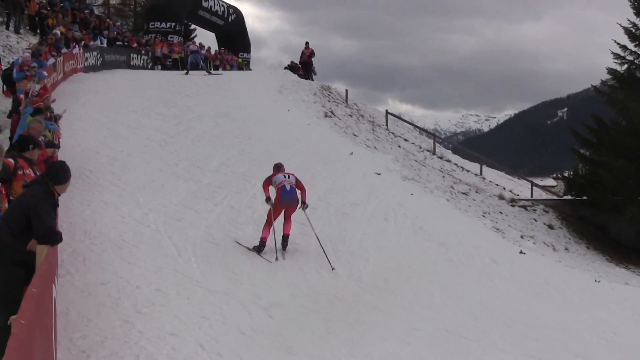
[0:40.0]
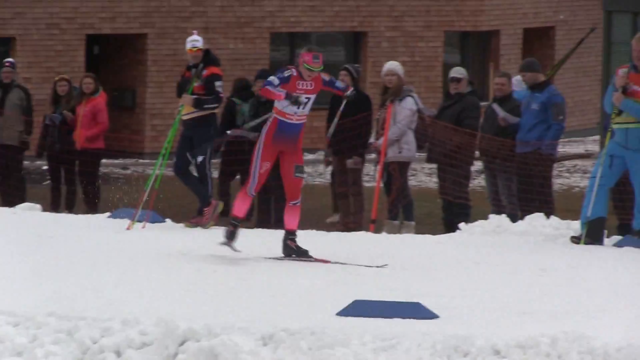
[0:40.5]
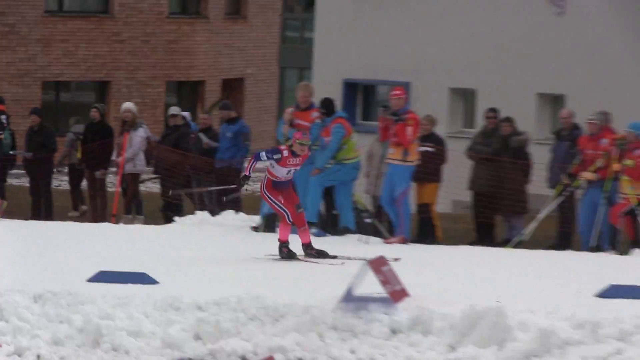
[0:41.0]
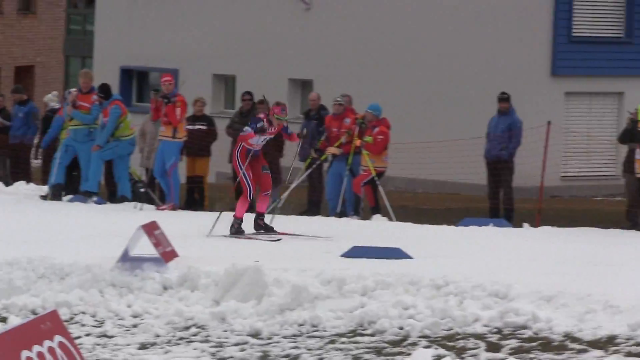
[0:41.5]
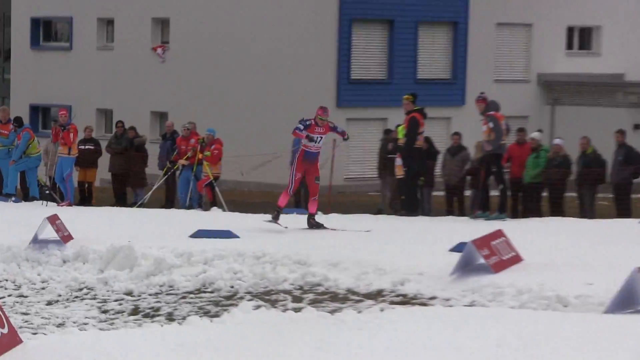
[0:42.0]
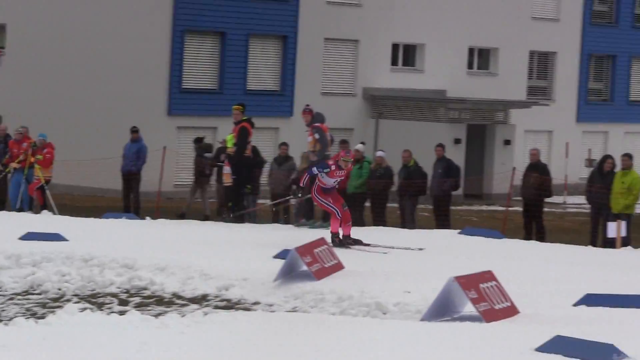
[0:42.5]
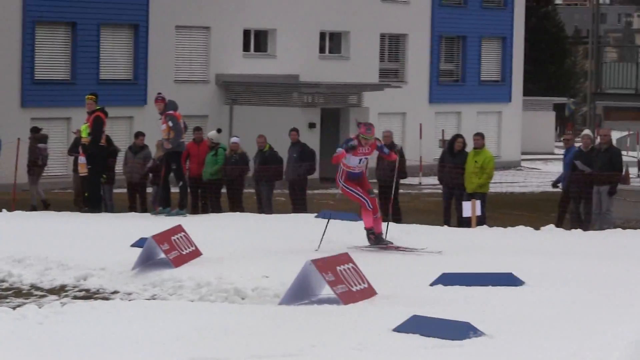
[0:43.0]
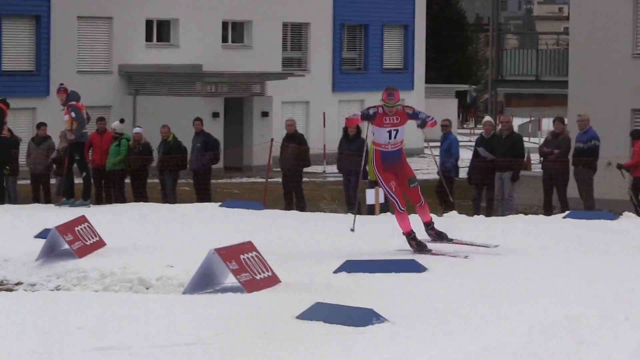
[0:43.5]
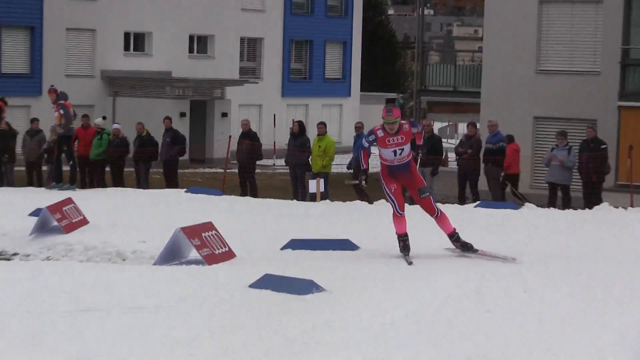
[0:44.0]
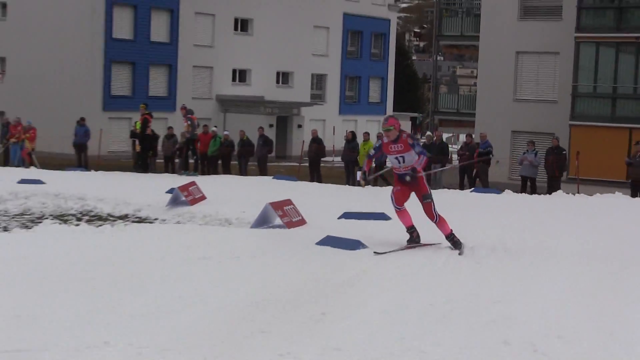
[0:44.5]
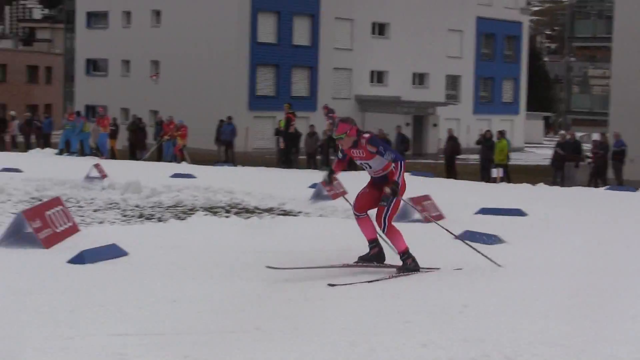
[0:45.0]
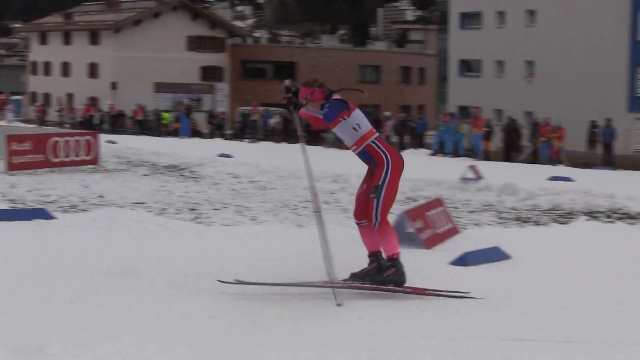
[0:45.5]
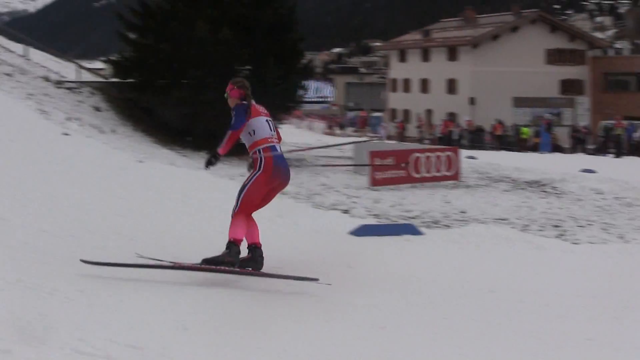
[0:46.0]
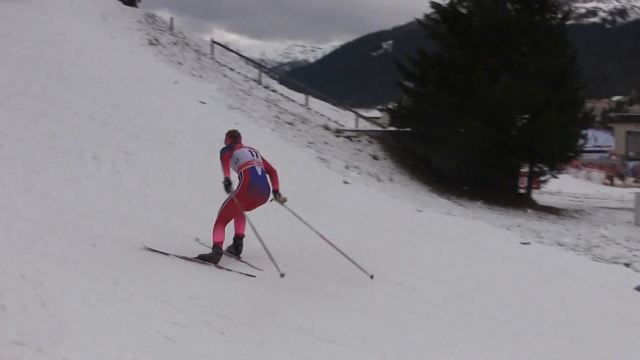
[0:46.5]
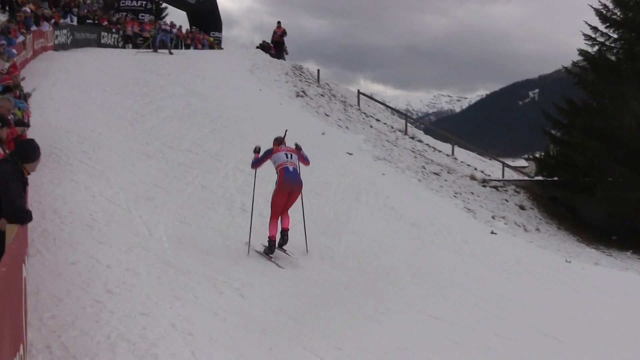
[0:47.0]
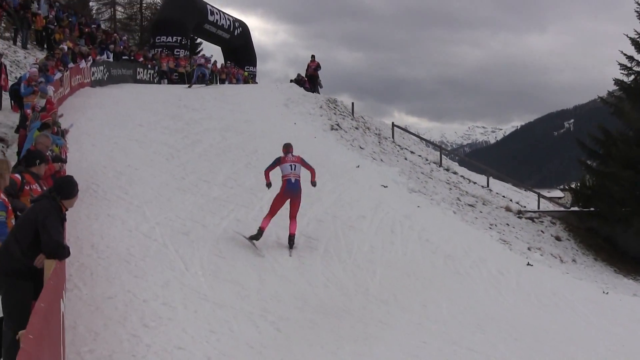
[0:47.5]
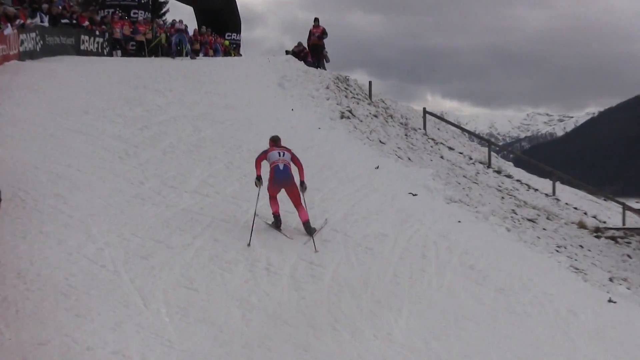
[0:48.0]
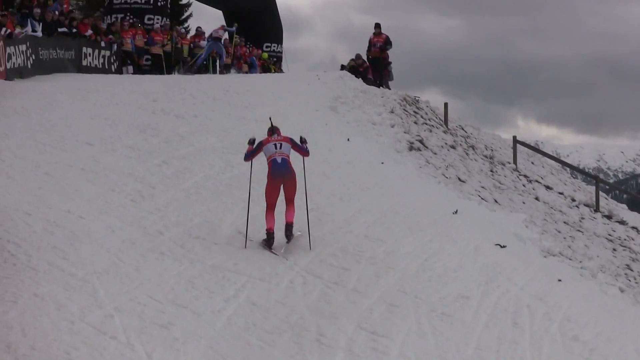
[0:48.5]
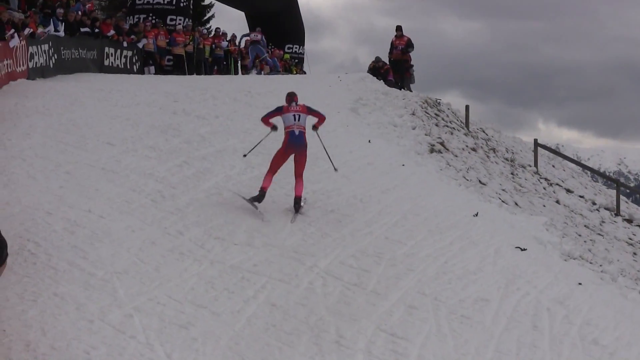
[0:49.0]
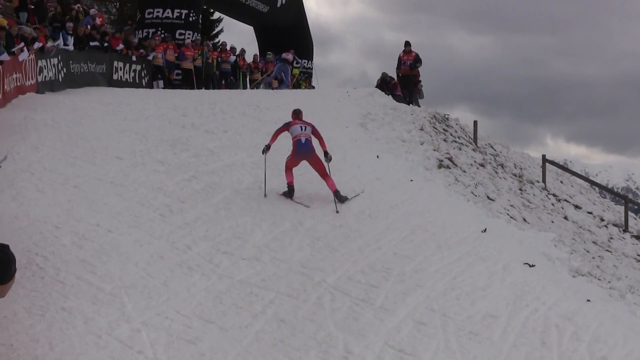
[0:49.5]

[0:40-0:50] The same typical angle is shown: the woman goes up the slope from the bottom all the way to the top. The footage is repeated with nothing changing, and this time it plays at normal speed, the same speed as the first showing.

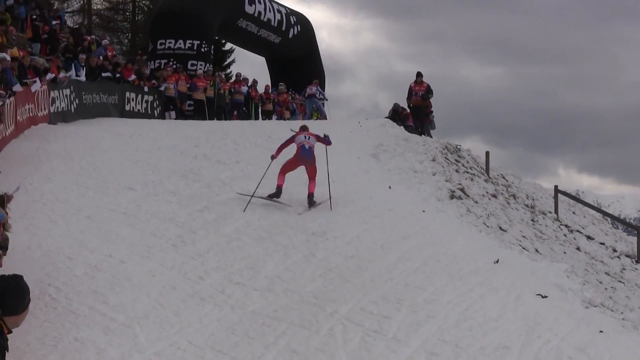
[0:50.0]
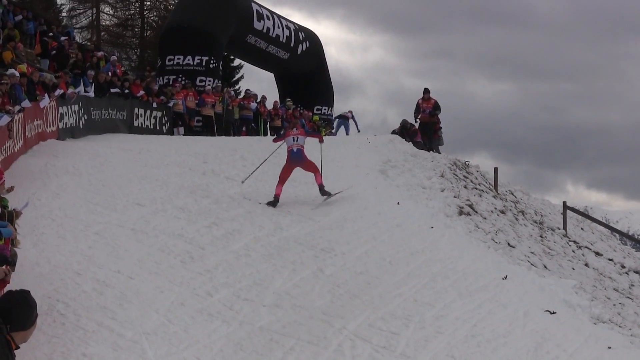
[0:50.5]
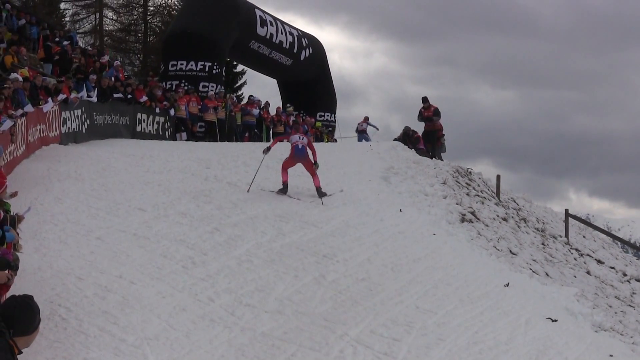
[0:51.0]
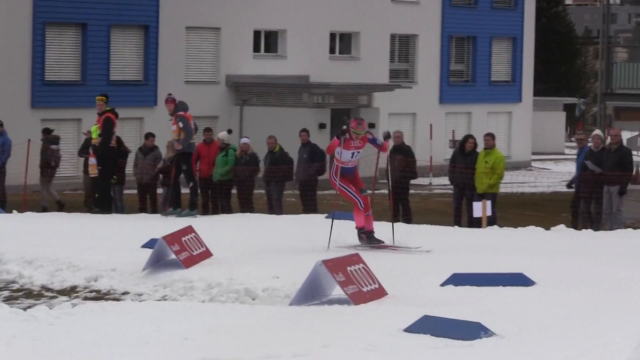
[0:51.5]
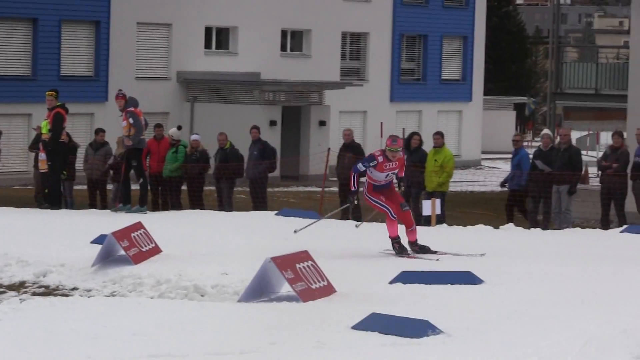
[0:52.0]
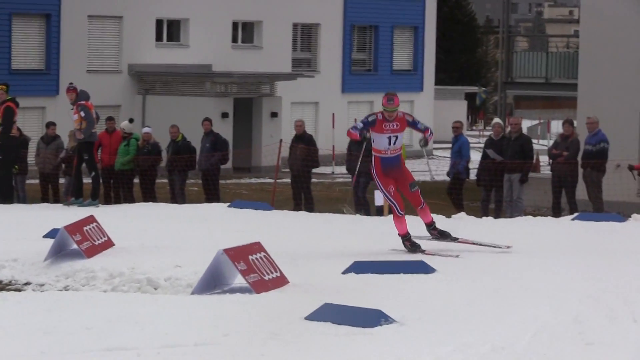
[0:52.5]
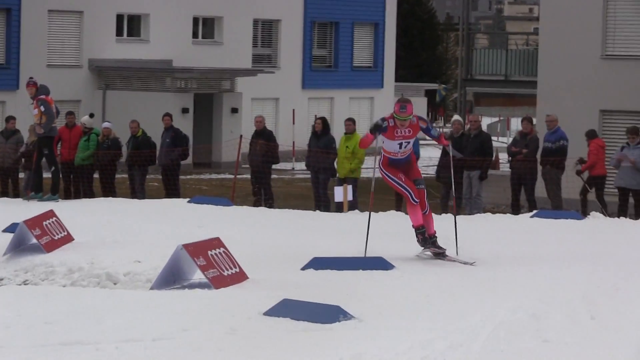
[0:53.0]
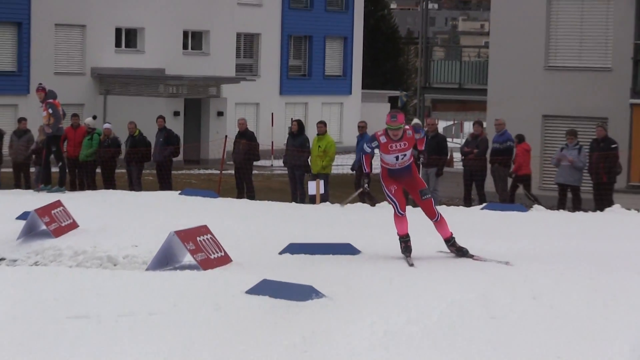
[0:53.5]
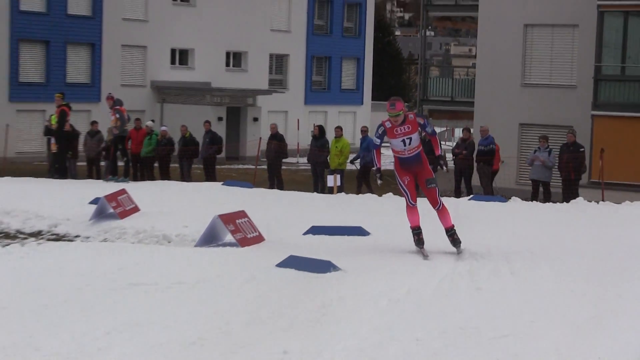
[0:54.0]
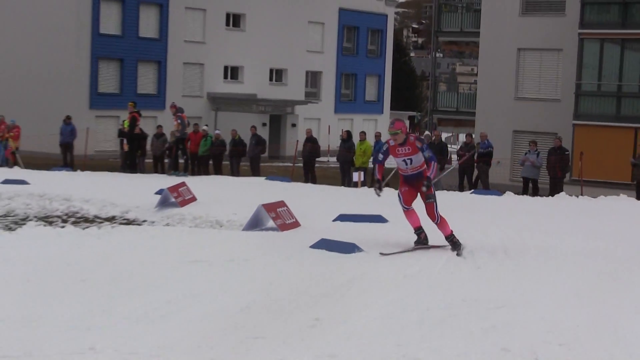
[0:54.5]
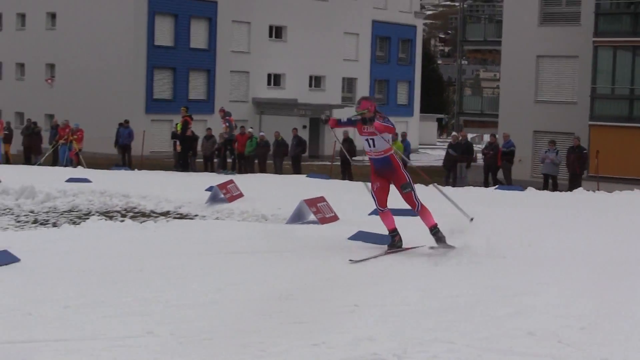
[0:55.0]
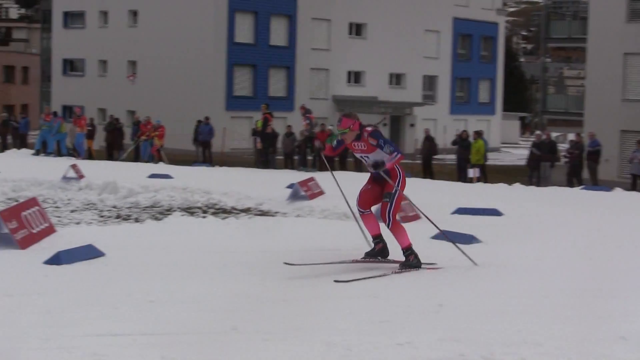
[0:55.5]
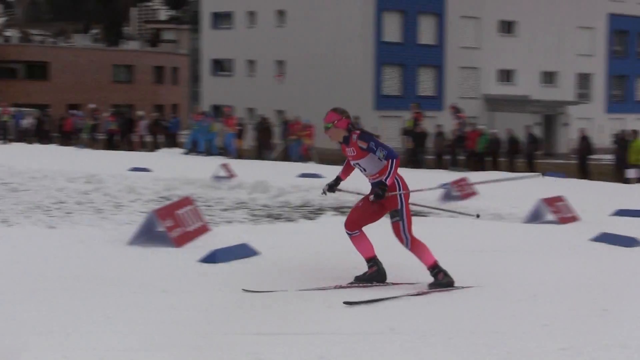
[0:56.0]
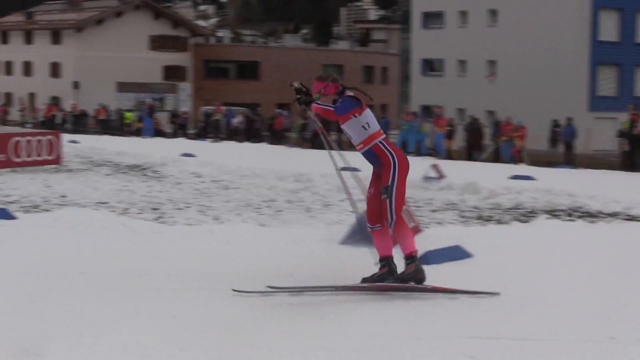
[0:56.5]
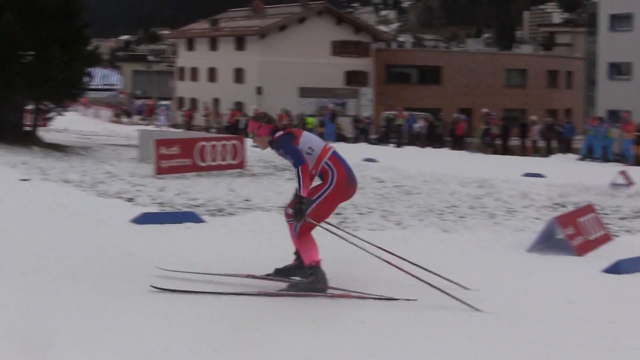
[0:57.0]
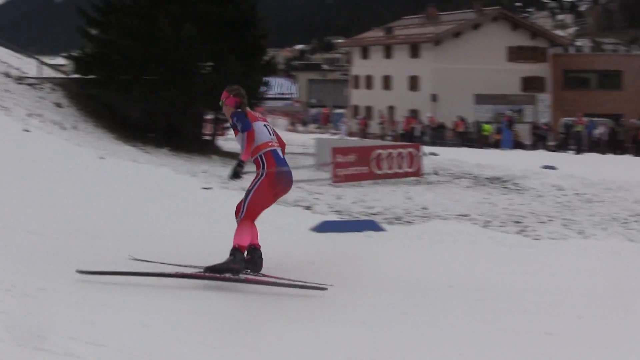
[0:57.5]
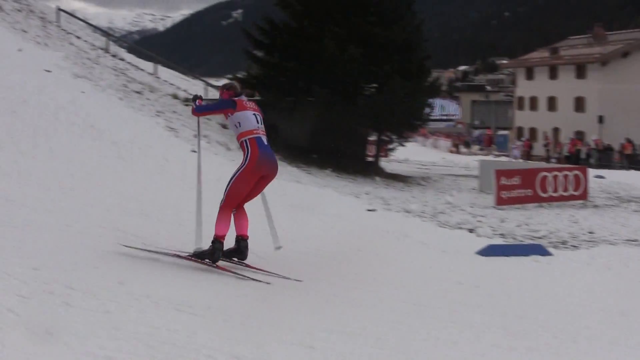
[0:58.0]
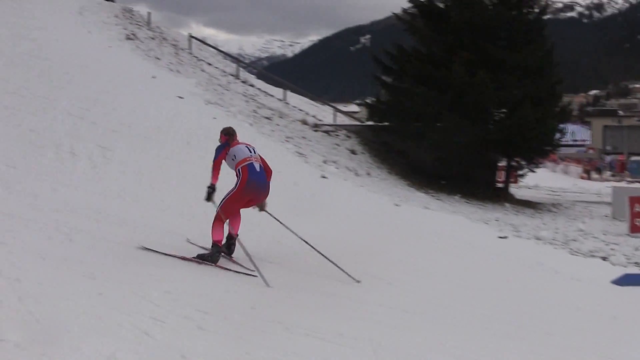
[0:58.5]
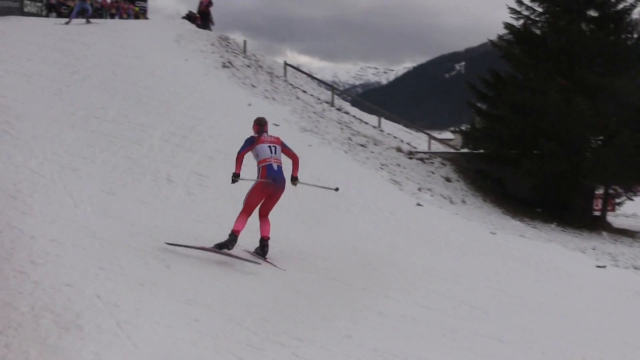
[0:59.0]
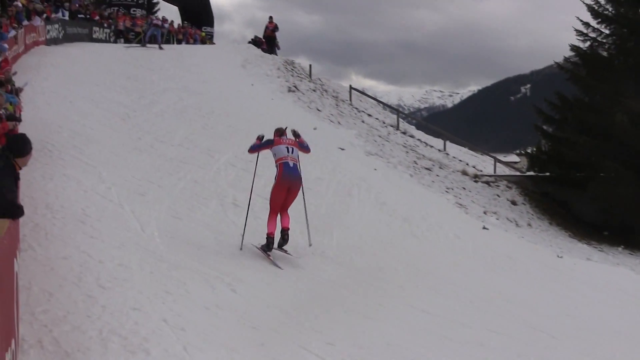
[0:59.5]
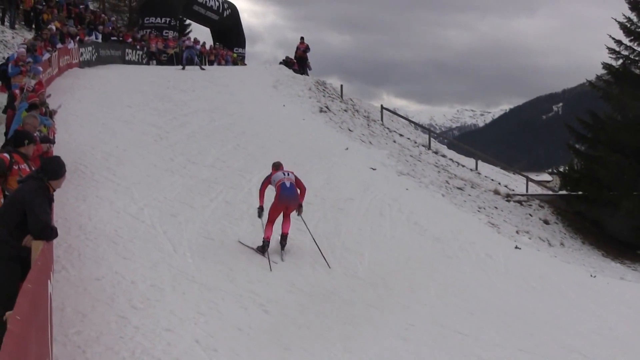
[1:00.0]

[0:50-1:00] The footage starts in slower motion. It does not show her reaching the top of the slope; it shows her from the bottom, slowly trying her hardest to pull herself up the slope, in much slower motion. The scene and area are the same, with nothing changing.